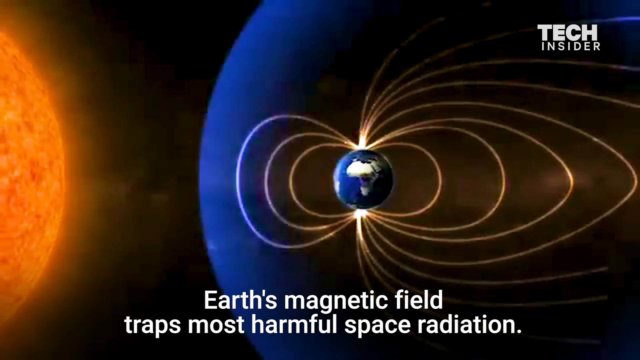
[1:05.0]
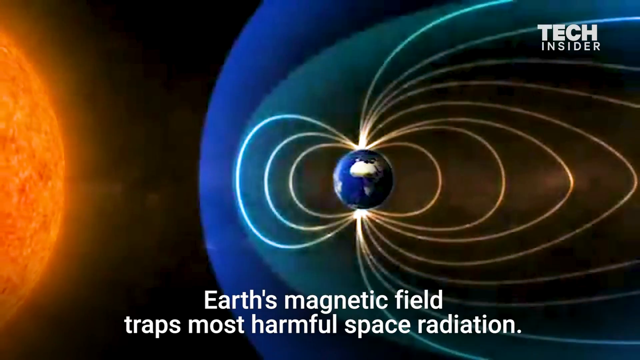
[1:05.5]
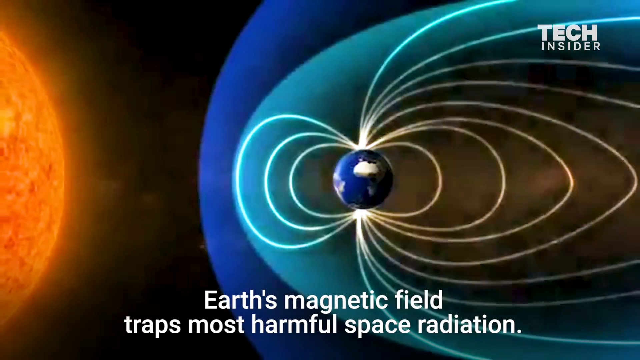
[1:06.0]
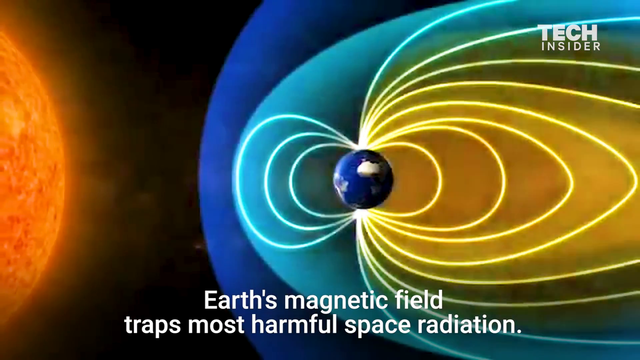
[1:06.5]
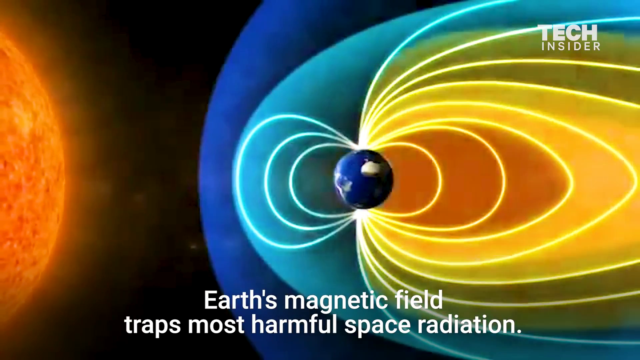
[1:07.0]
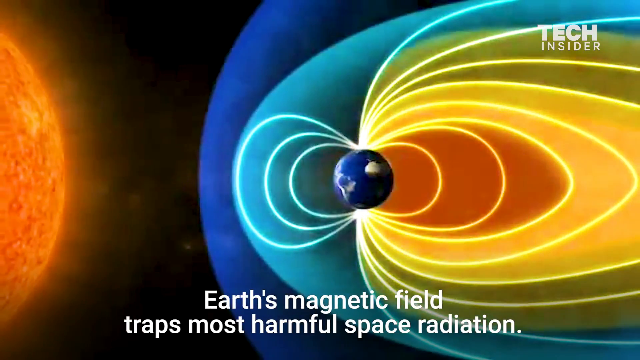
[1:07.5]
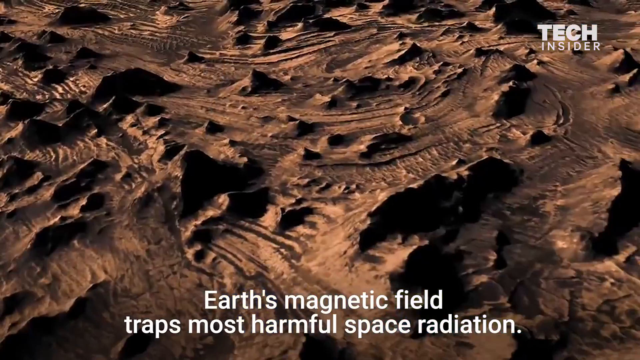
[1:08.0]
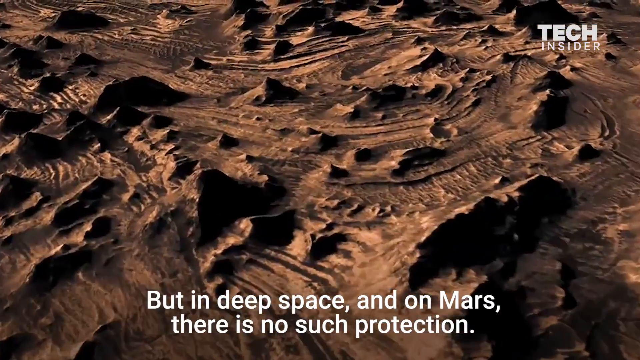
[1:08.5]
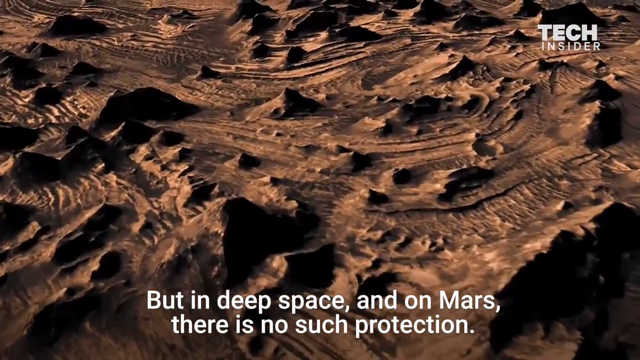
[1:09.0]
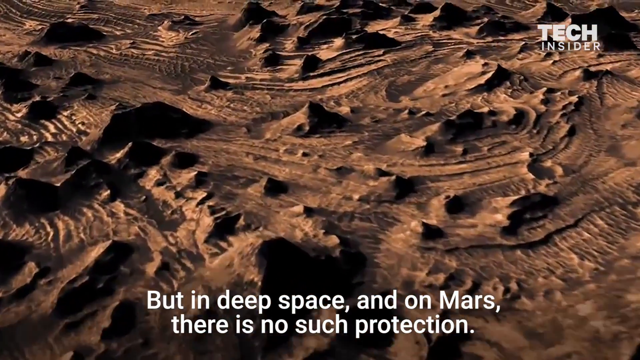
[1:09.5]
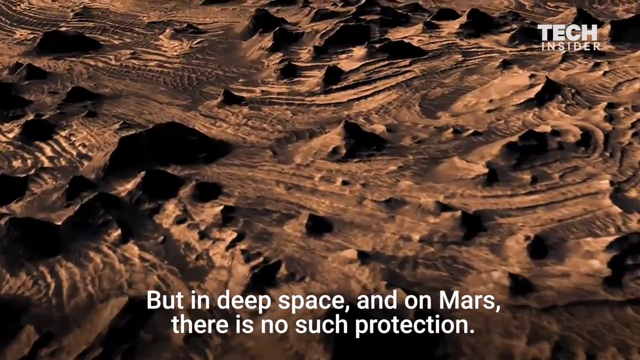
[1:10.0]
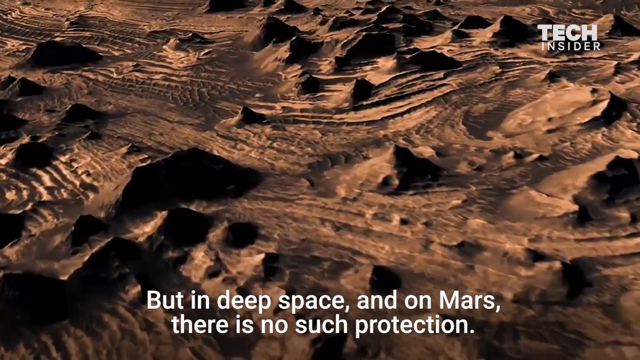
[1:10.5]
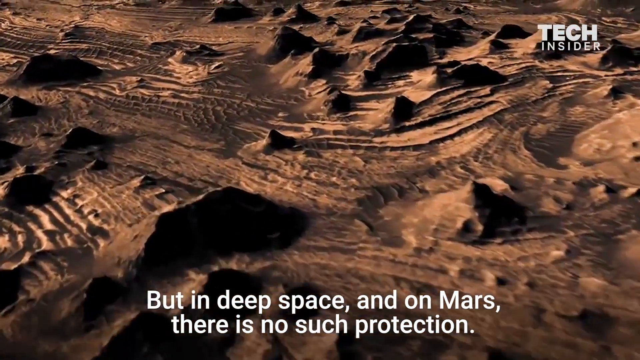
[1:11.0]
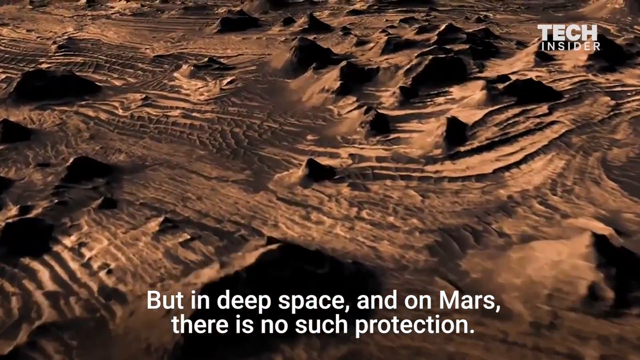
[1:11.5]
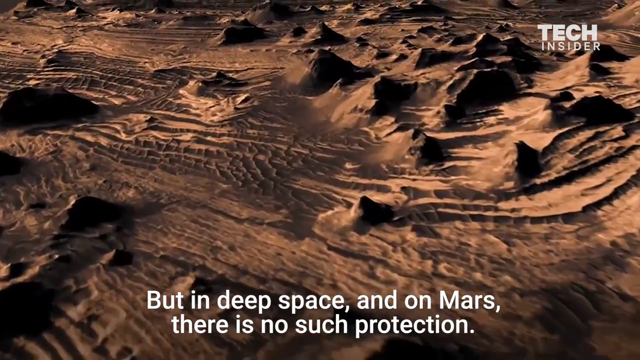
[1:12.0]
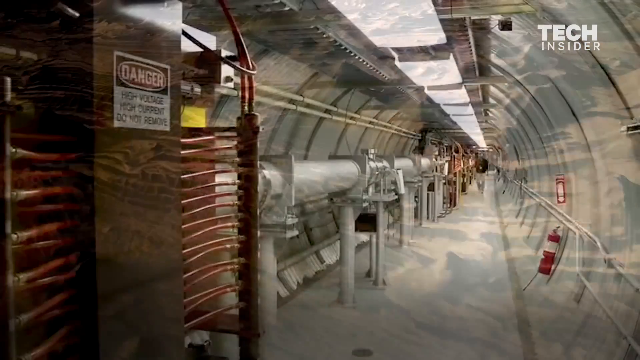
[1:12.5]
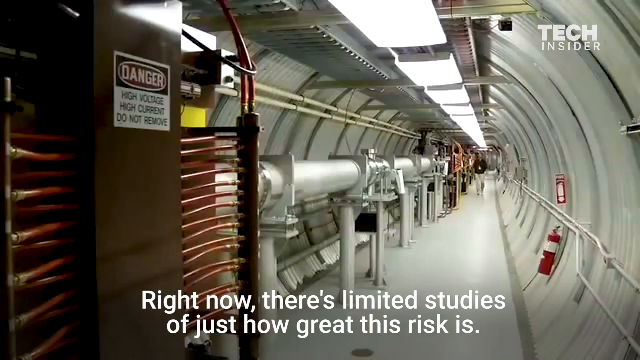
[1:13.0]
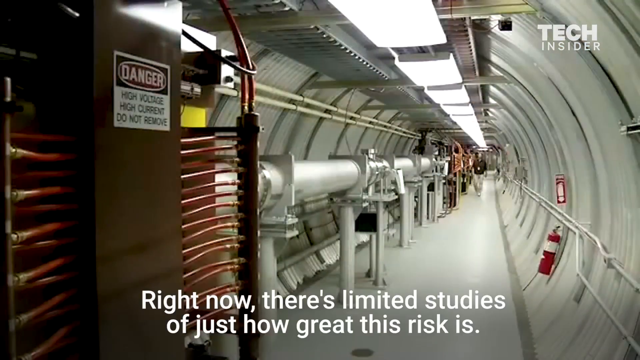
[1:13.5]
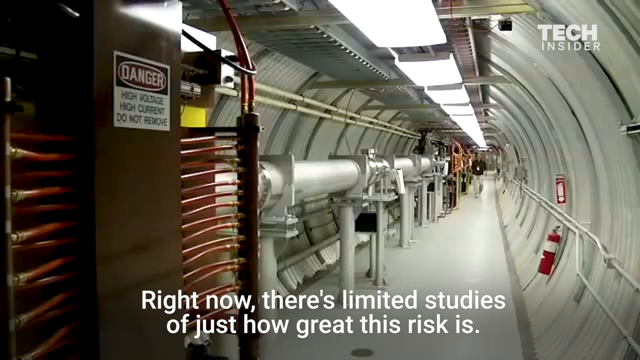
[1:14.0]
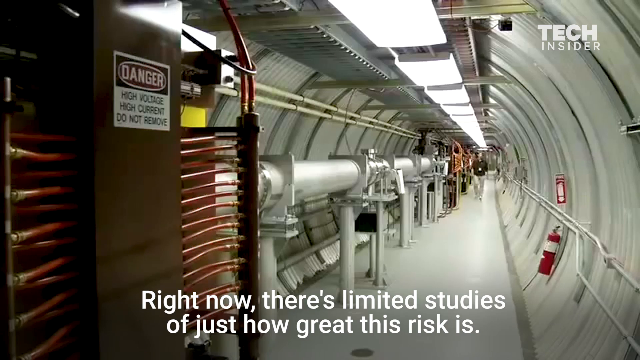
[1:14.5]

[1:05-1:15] The Earth is shown with magnetic shield lines drawn in a graphic around it. After that comes something like a flyover of the Martian terrain: a reddish planet with mountains and a dry surface with no plants growing. The video then cuts to the inside of what looks like an accelerator facility, possibly CERN, showing sort of a tube that looks like a particle accelerator, with a smaller tube running down a very long corridor. This is possibly where the effects of intense exposure to cosmic radiation are studied.